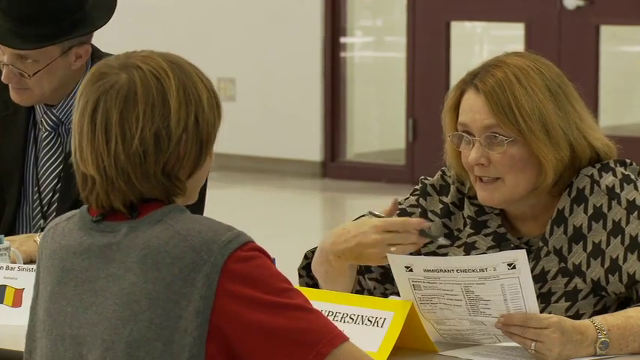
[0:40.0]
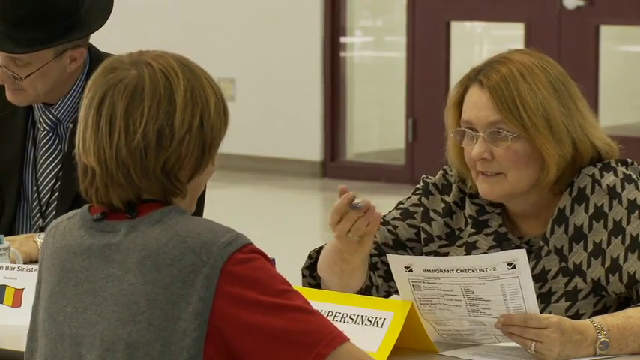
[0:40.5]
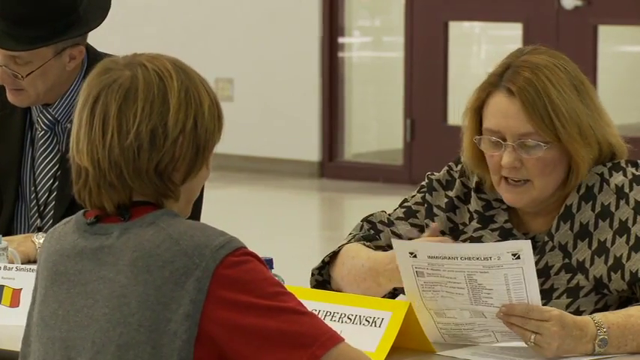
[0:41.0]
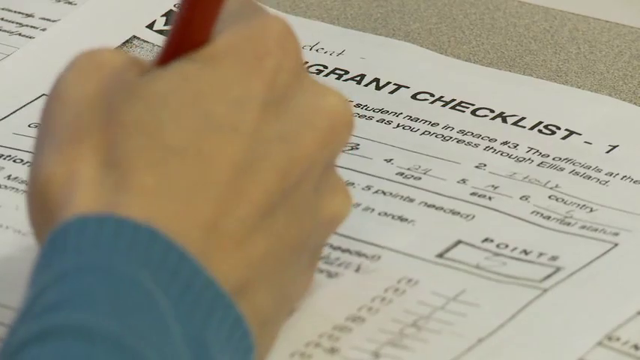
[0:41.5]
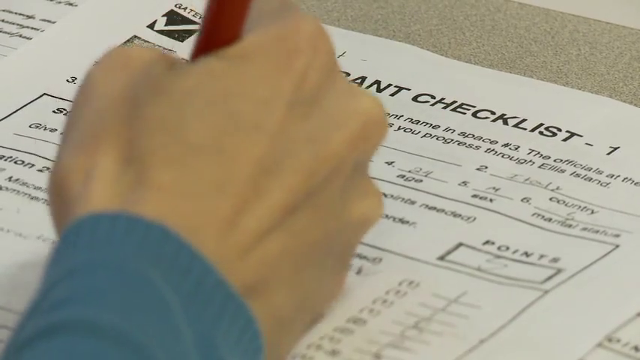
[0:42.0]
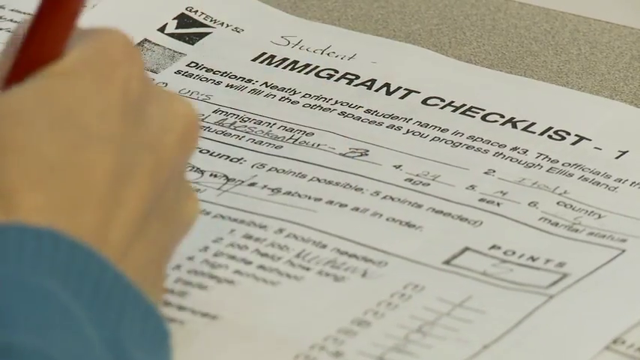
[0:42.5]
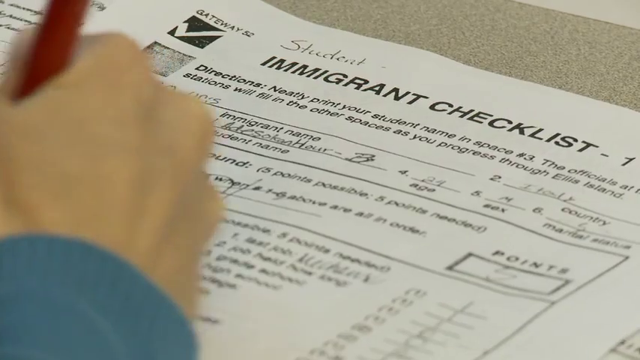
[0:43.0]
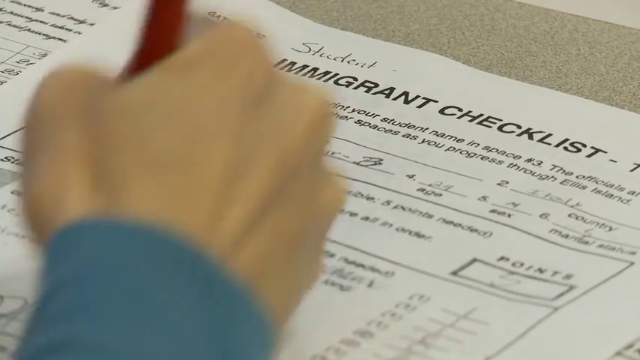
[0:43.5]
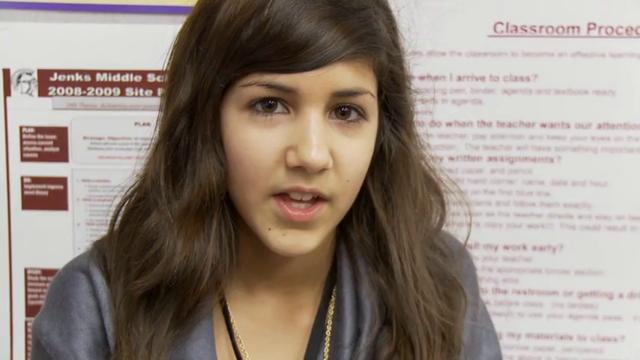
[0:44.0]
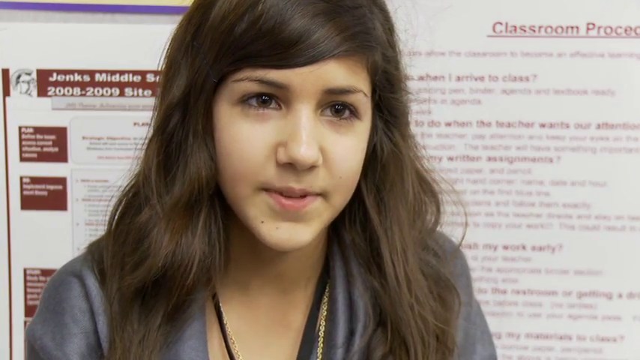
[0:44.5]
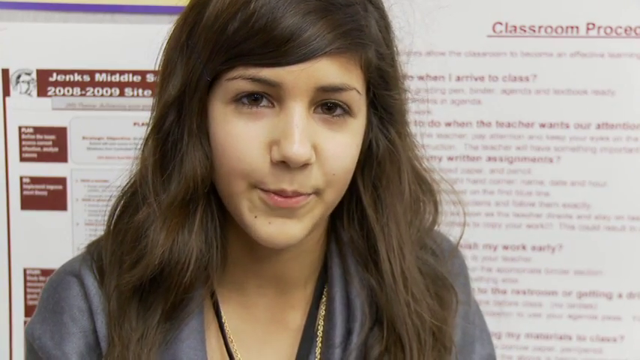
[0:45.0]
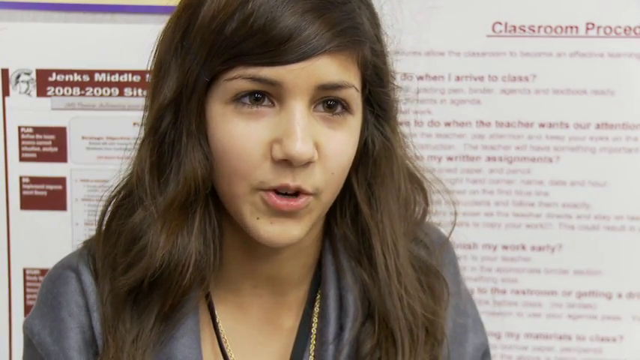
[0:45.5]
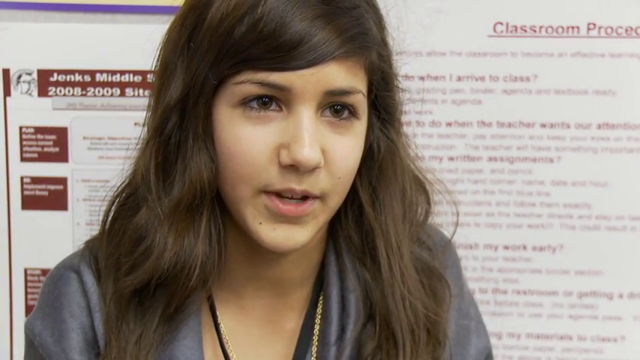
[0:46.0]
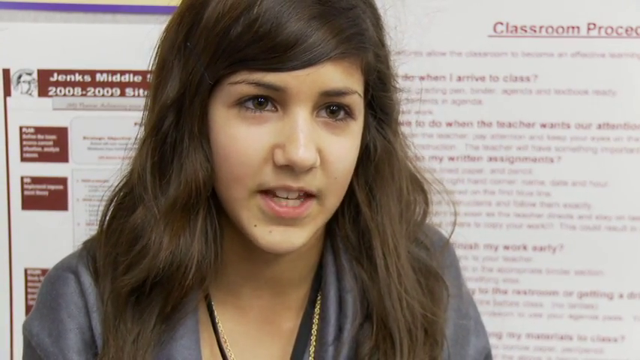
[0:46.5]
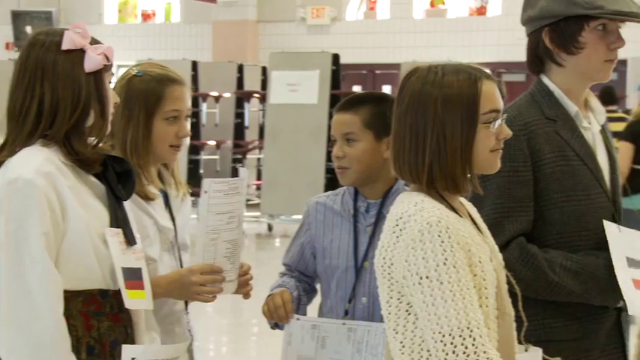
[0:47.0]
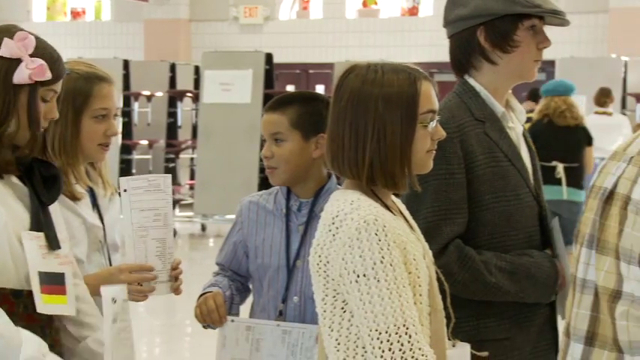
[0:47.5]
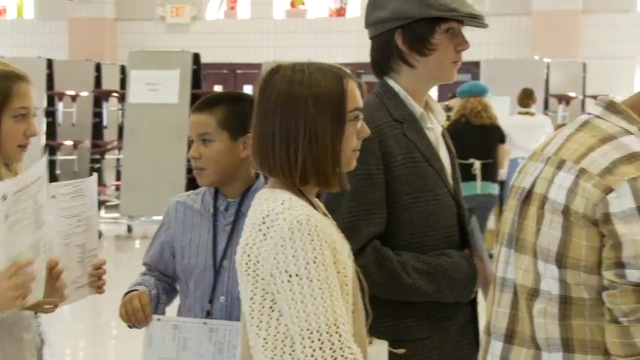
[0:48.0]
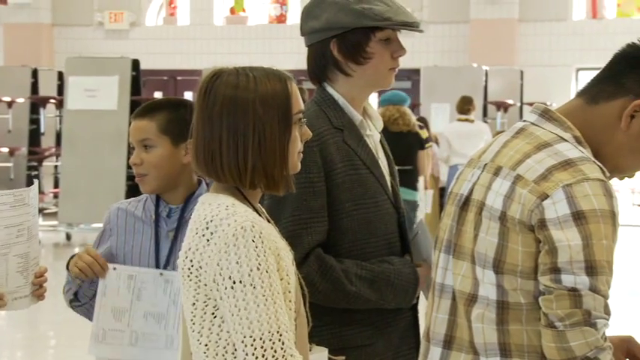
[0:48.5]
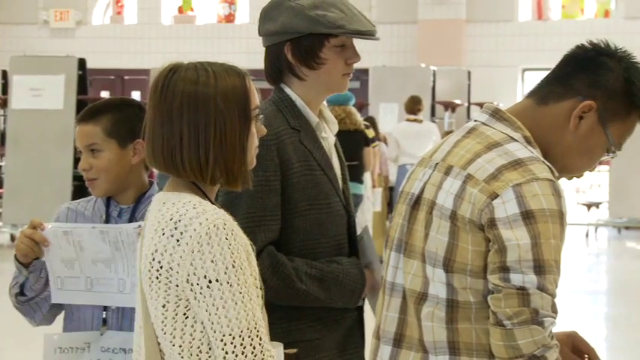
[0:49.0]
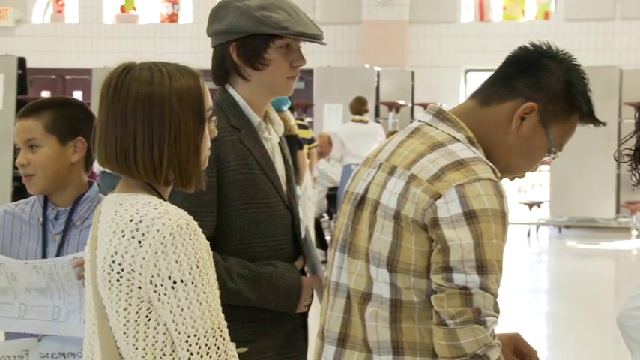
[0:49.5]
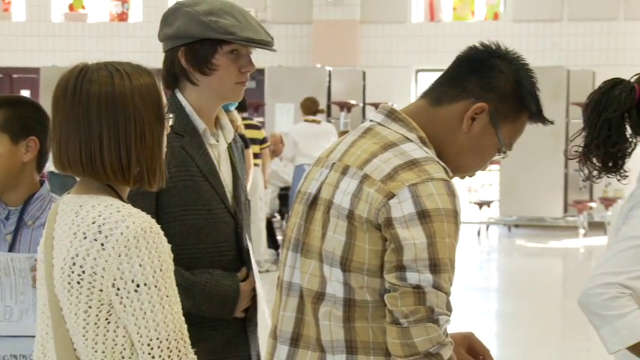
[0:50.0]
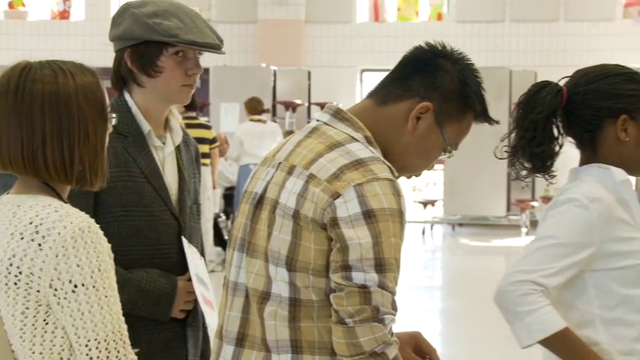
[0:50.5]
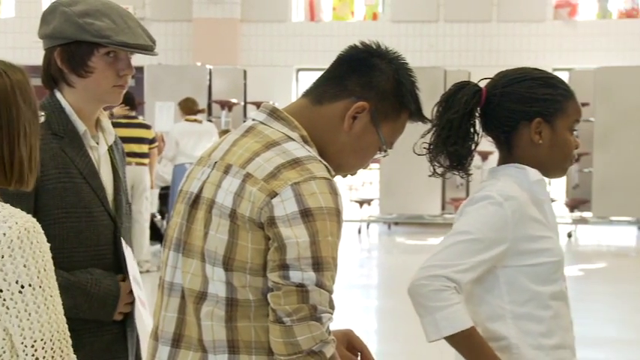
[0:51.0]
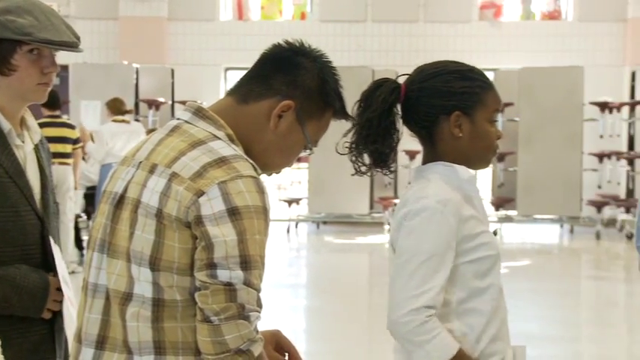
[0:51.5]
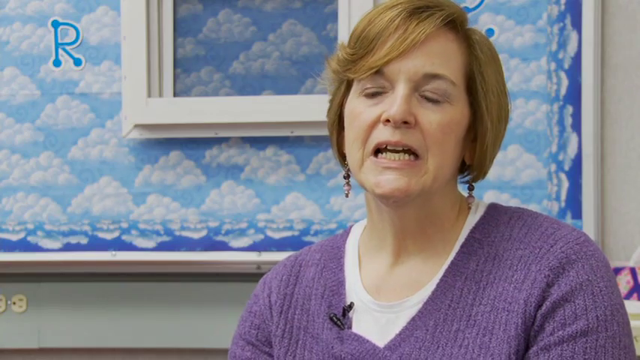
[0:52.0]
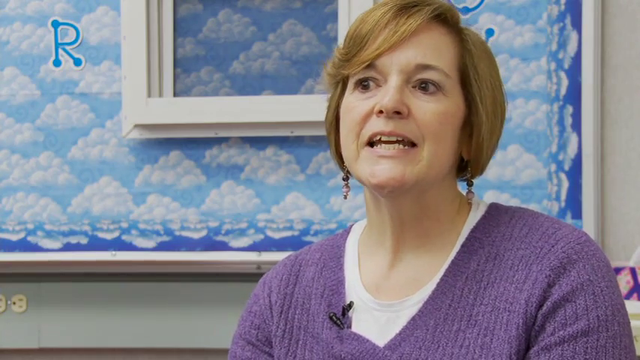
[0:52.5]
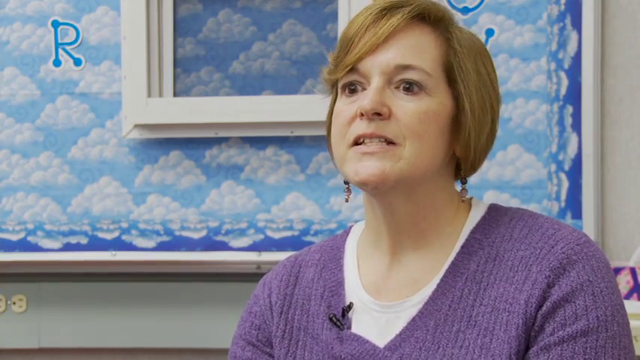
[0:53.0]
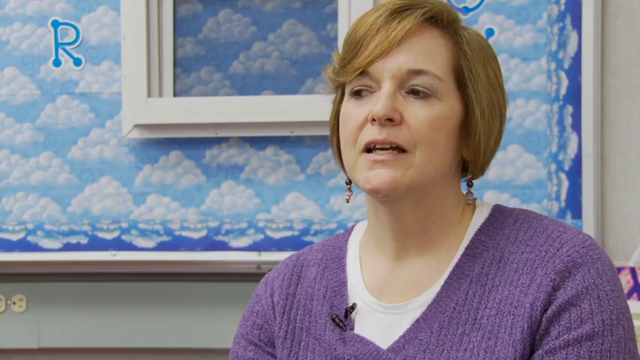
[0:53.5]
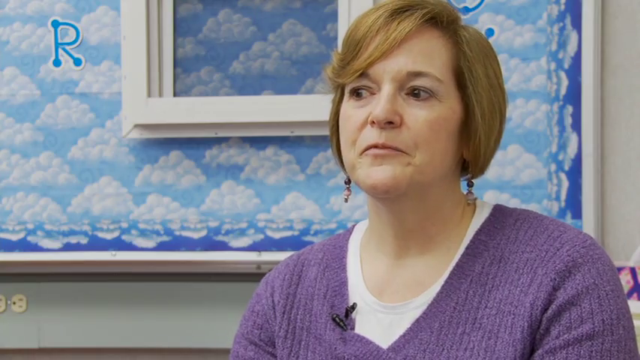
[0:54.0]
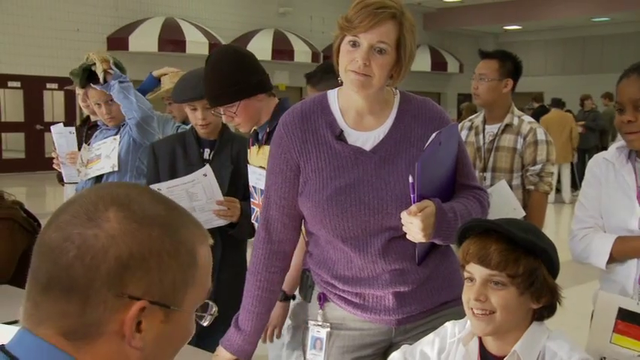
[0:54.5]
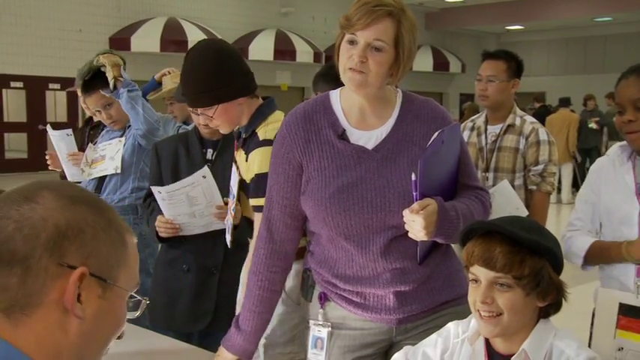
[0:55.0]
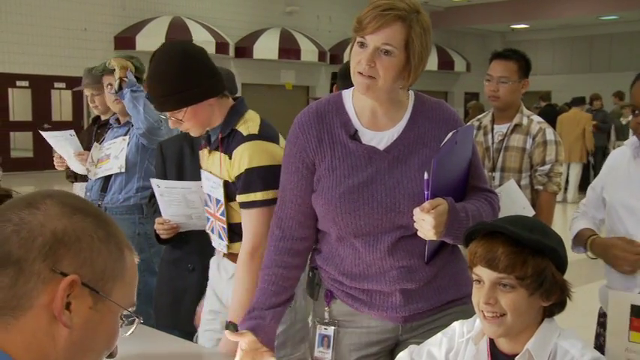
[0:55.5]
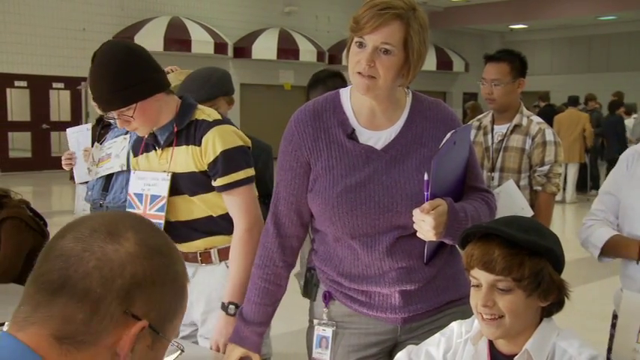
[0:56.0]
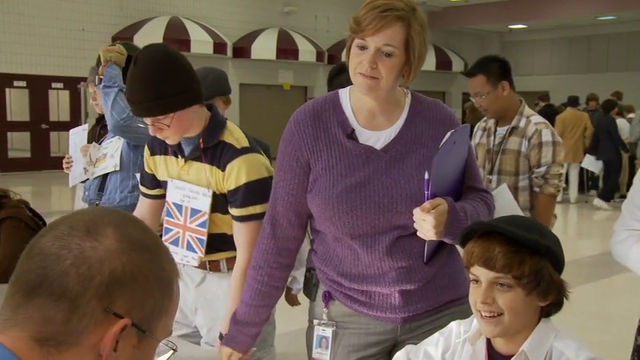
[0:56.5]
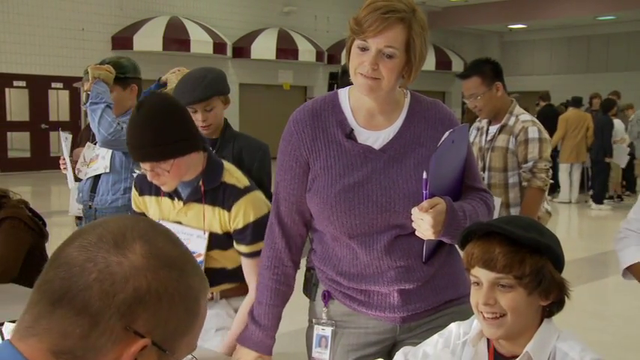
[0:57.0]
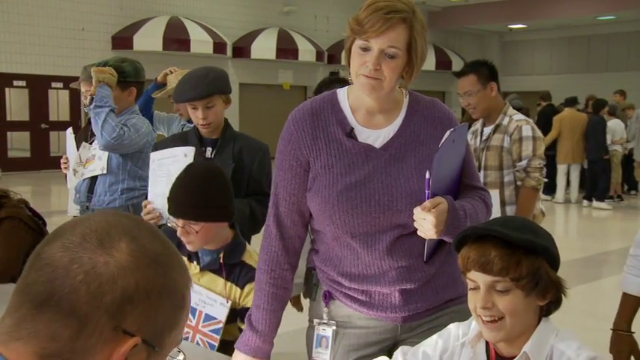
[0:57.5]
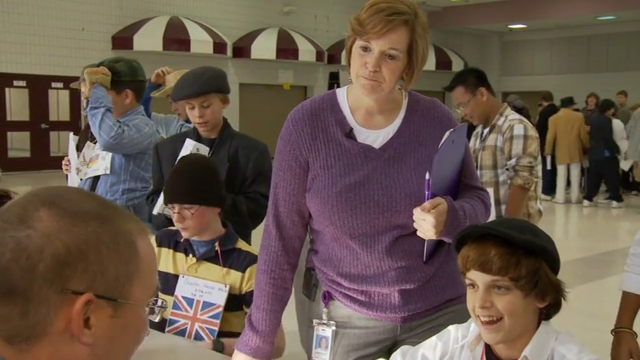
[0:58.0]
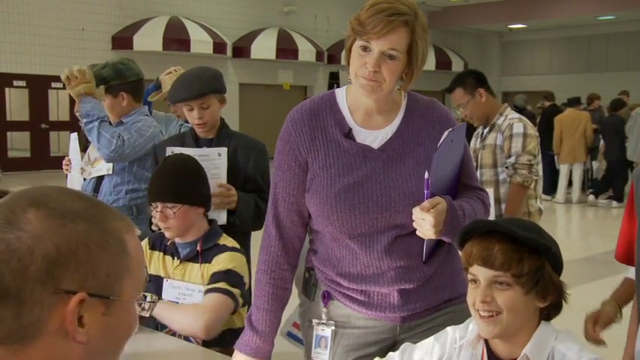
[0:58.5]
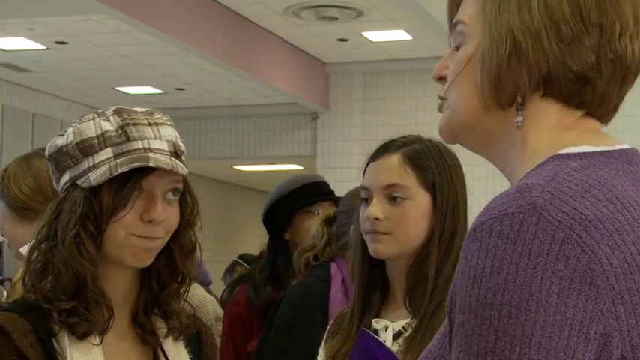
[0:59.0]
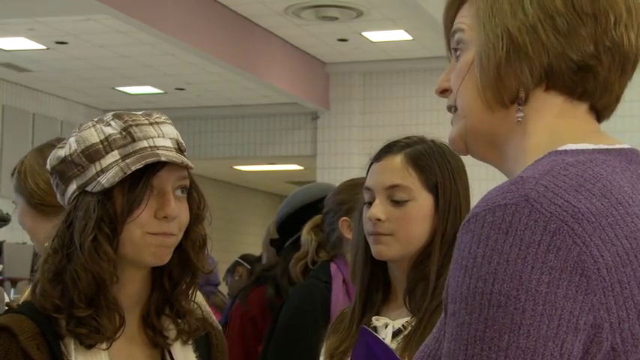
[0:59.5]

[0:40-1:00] Text reads "immigrant checklist." A young woman talks to the camera, and what look like more children and teenagers appear, followed by a red-haired woman in a purple sweater. Many teenagers are present. Text reads "neatly print your student name in," and "Jenks Middle School" appears on something in the background, suggesting the location is Jenks Middle School. Several people have different flags that appear to hang around their necks; one man has a British flag, and another flag seems to be German or possibly Belgian. Ellis Island is mentioned on screen, and the scene looks like a recreation of Ellis Island immigration in a classroom. Few adults are visible; the ones present might be chaperones. People seem to be going through some sort of process.